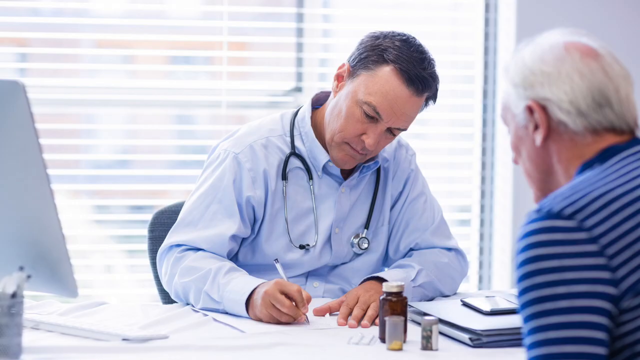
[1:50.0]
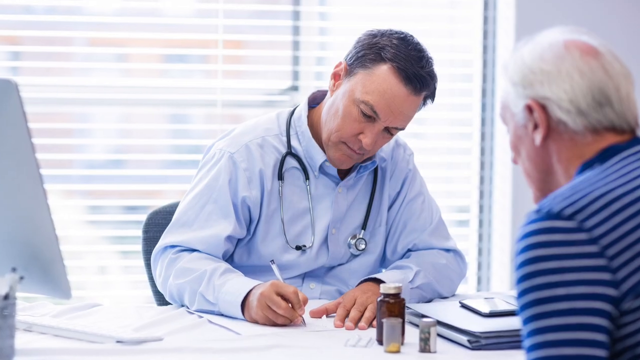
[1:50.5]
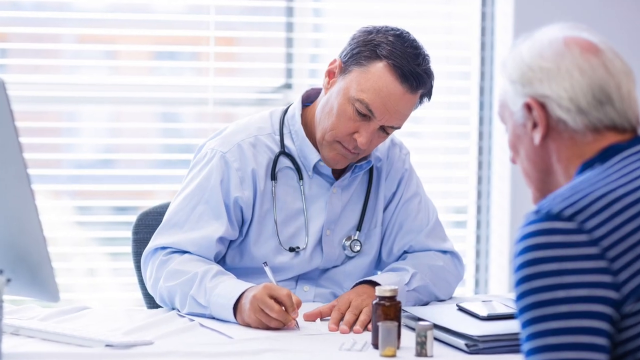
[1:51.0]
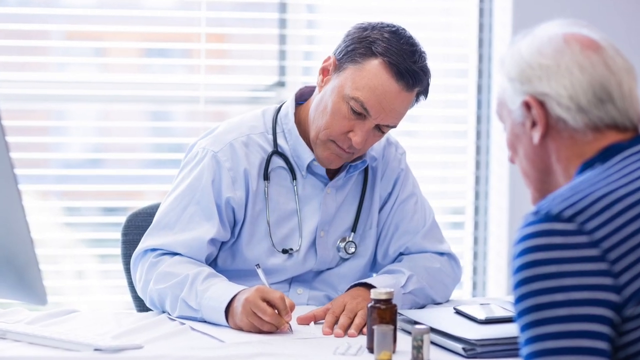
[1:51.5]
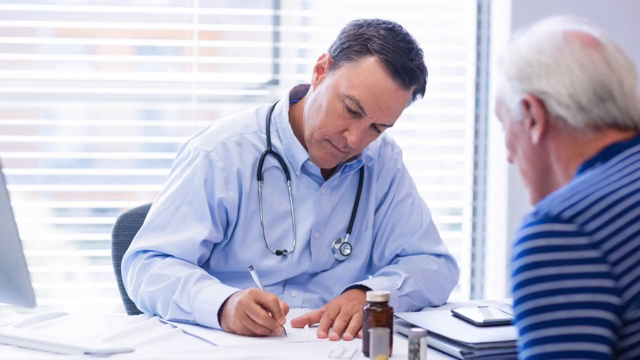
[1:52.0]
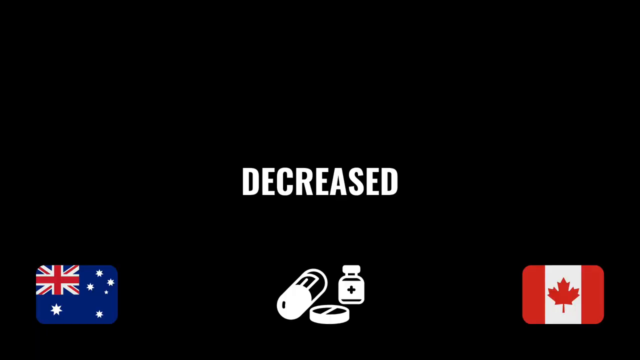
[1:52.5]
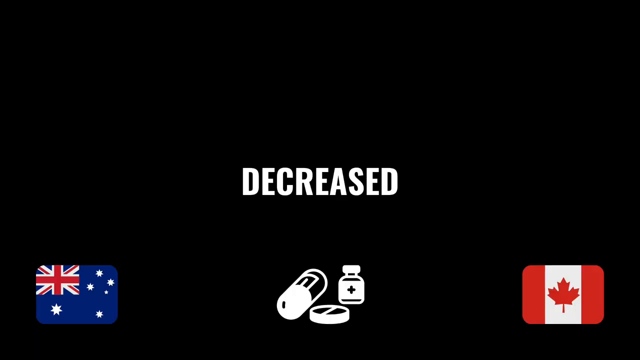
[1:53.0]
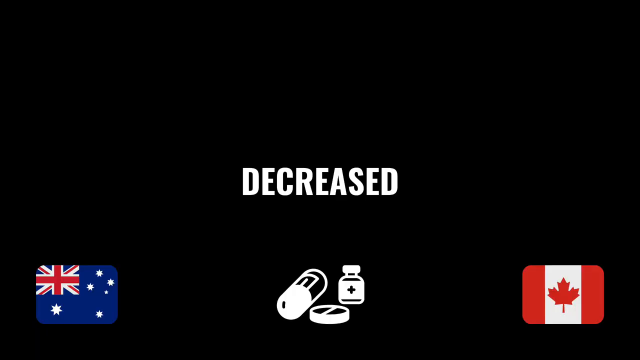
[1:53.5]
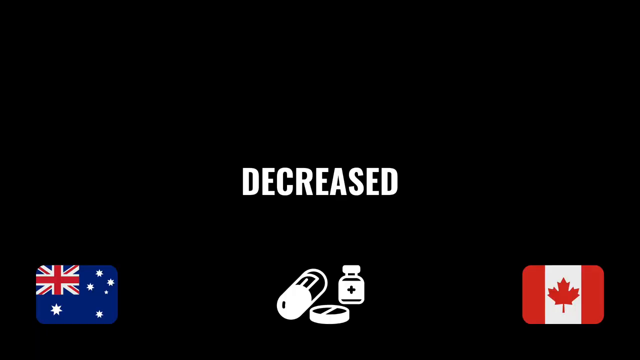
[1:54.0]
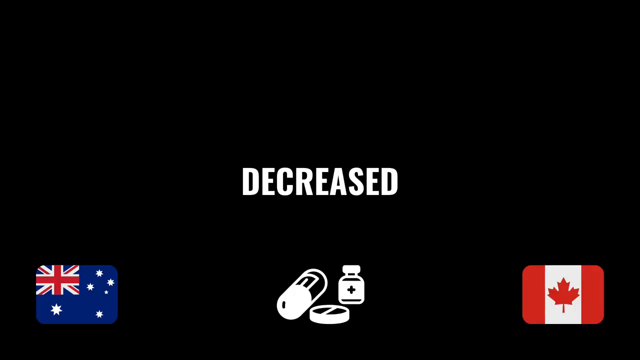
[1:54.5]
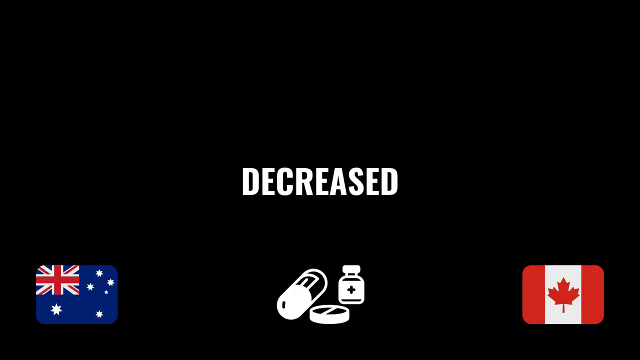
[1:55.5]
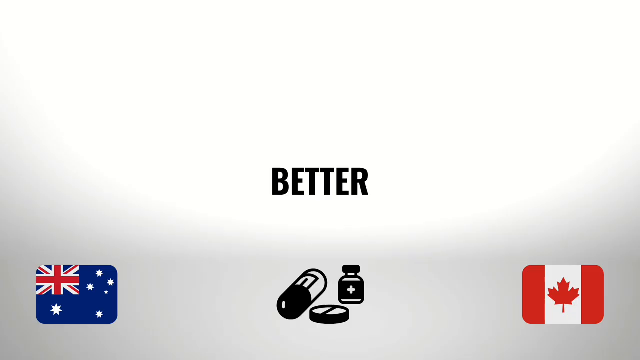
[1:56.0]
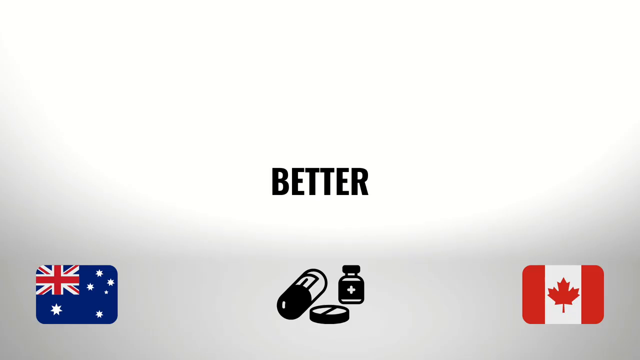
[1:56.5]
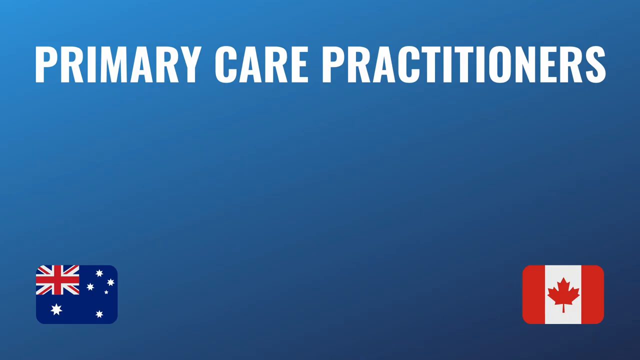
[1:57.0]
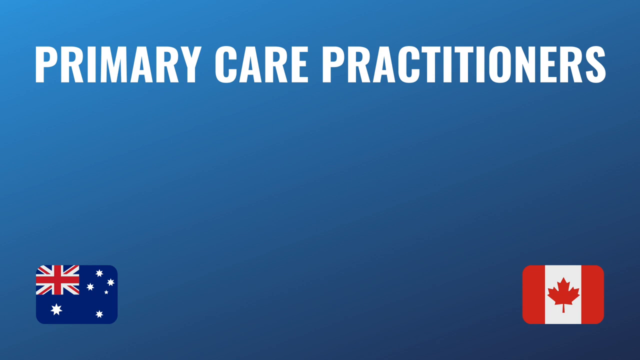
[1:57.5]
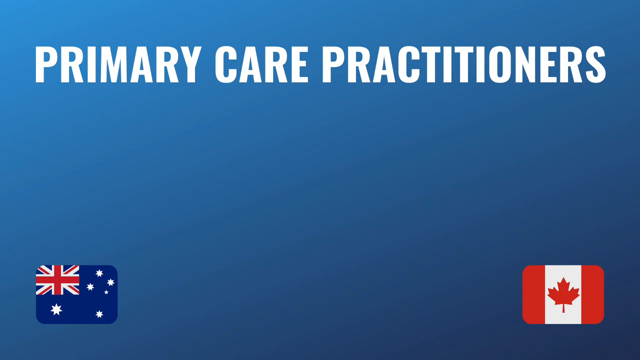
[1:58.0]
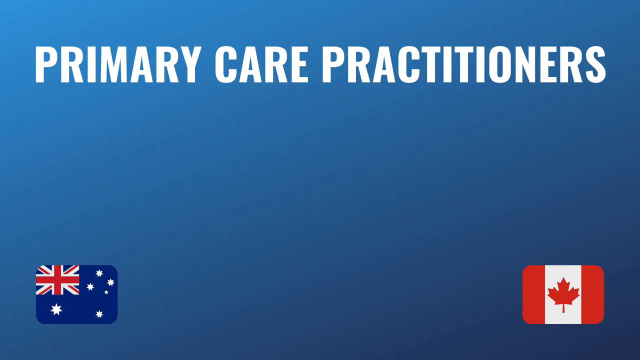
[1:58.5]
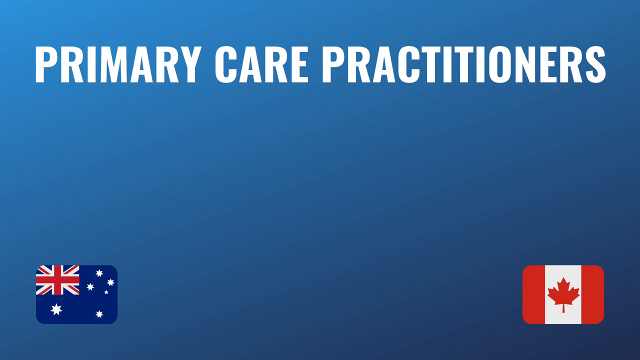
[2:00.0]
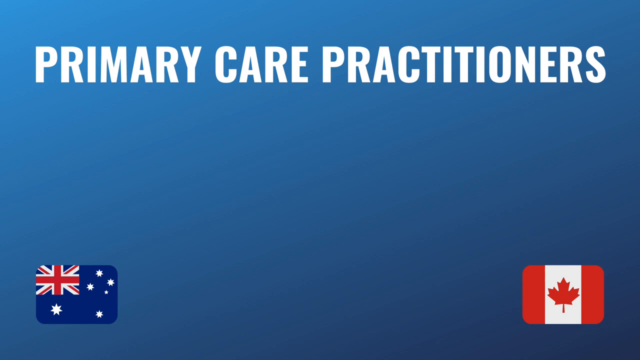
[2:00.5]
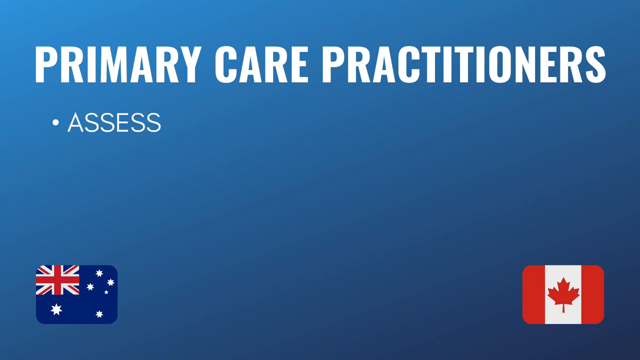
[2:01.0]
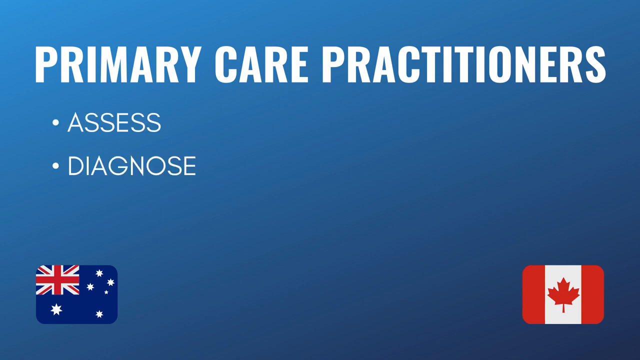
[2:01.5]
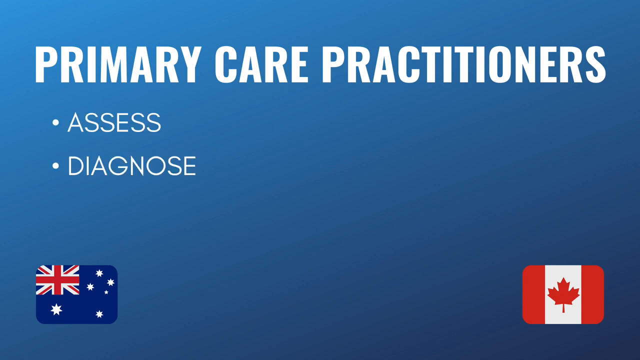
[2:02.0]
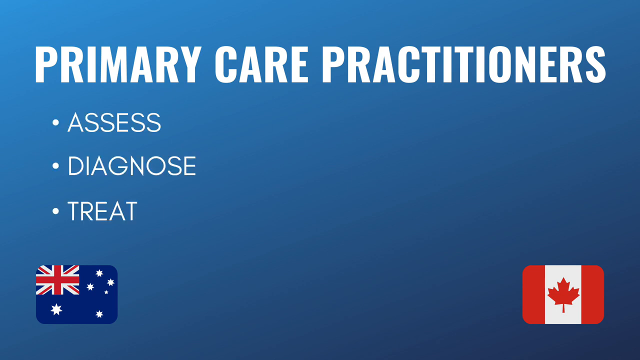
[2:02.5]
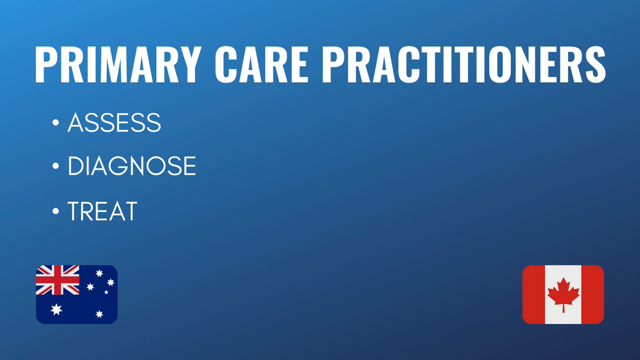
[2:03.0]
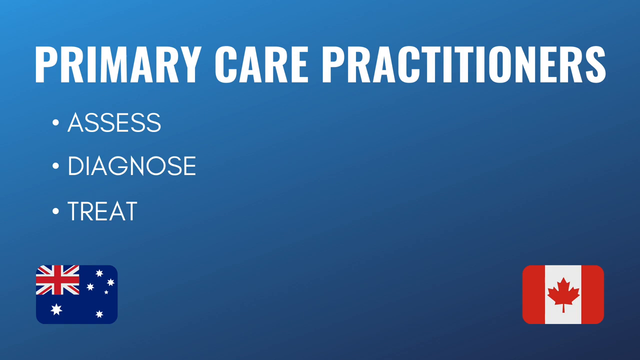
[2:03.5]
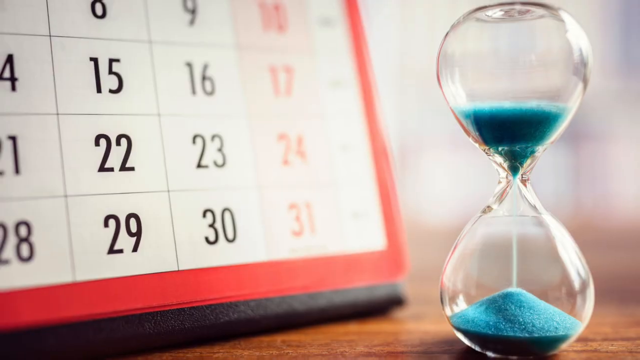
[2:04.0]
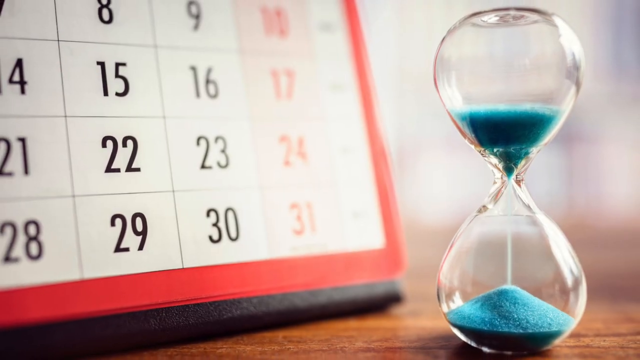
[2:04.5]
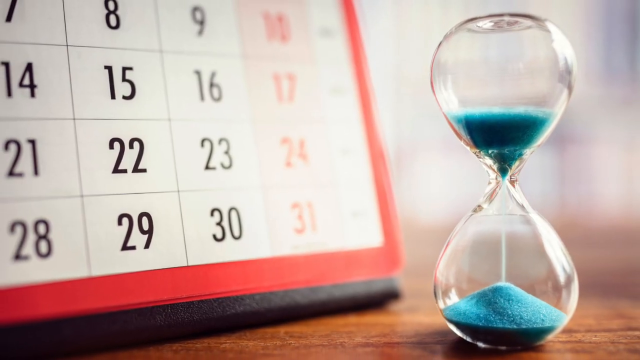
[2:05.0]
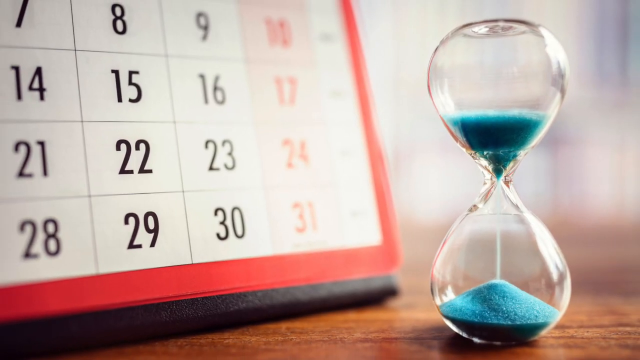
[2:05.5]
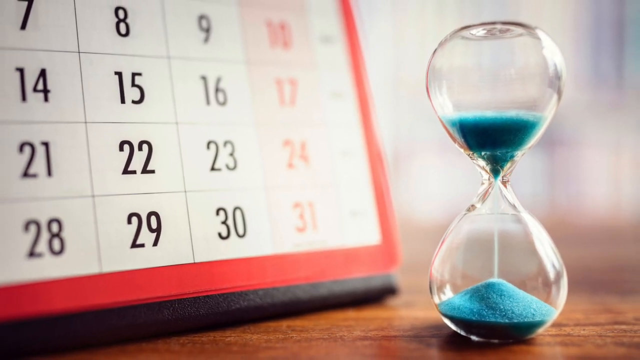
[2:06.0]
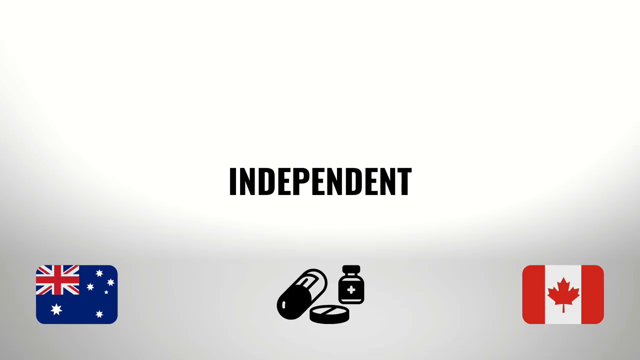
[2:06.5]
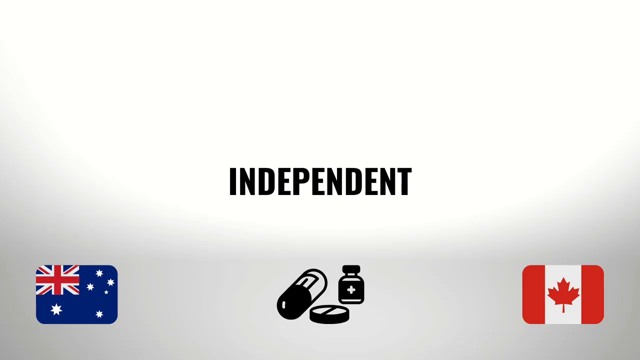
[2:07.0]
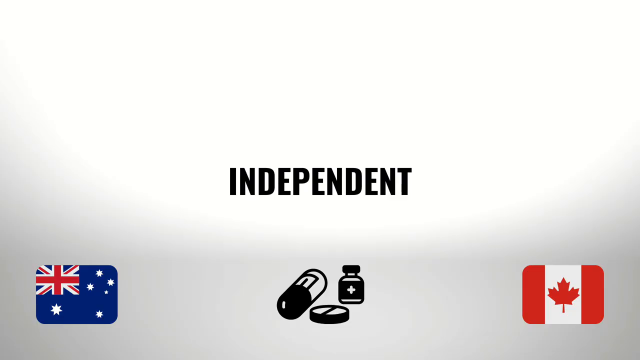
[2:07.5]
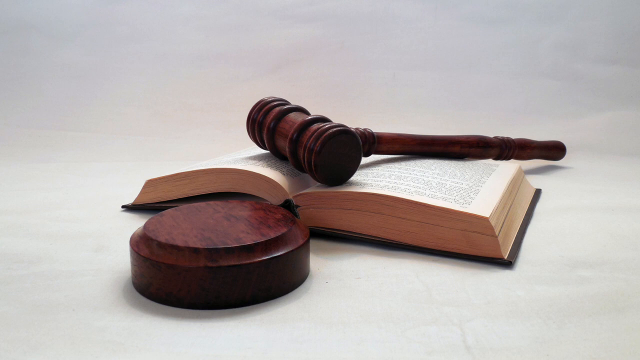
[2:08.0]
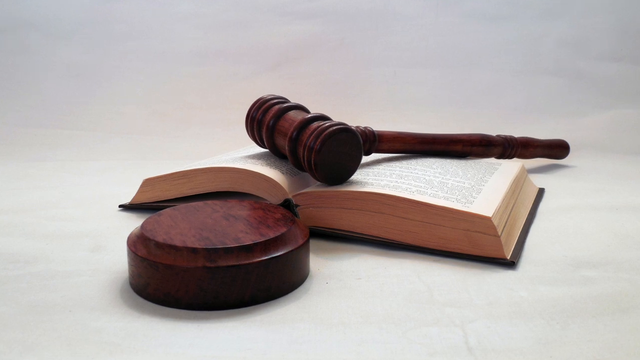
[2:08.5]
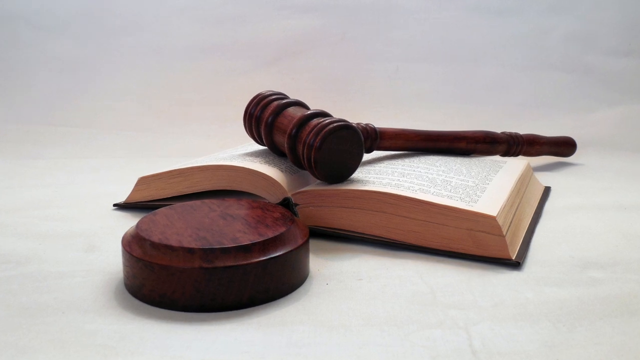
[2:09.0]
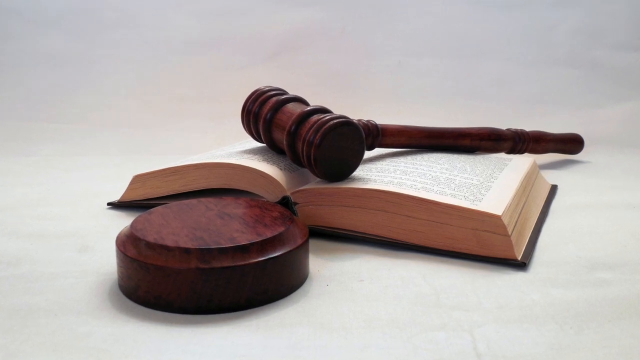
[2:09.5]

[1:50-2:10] Text says "decreased," "better," "primary care practitioners," "access diagnosed treat." An hourglass appears to the right of a calendar; the hourglass has blue grains and is about halfway full at the bottom and halfway full at the top. The calendar has black numbers and a red outline. Text then says "independent," and a gavel is lying on top of an open book. The gavel is old and dark reddish-brown, lying with its top part on the midsection of the book. The book has a black cover and looks old. The round foot piece the gavel strikes, a circular piece of solid reddish-brown wood, is visible toward the bottom of the screen. Text then says "develops."